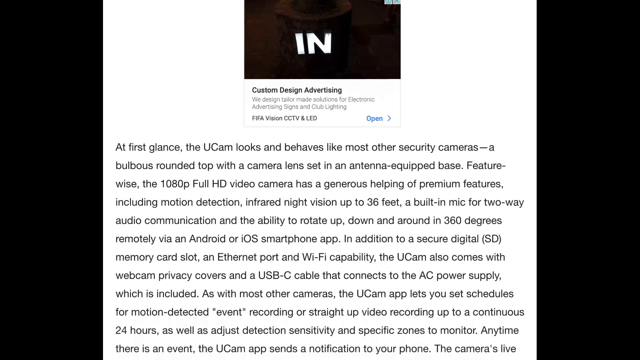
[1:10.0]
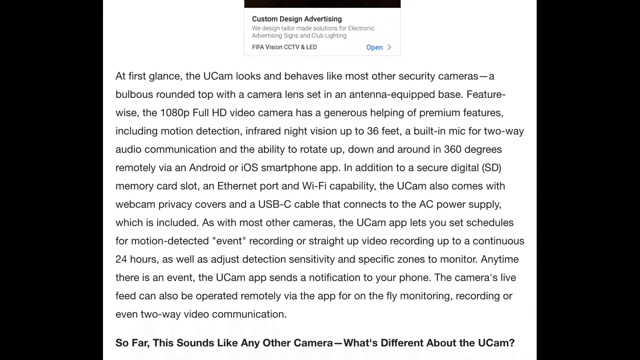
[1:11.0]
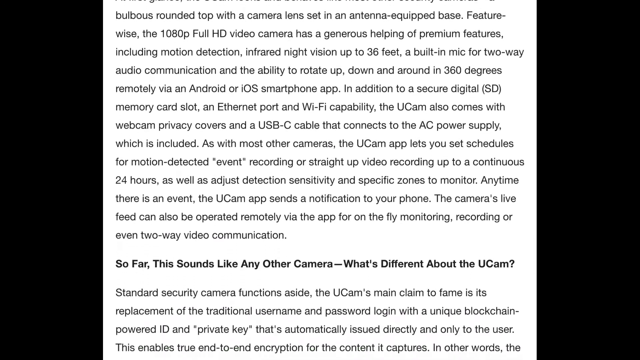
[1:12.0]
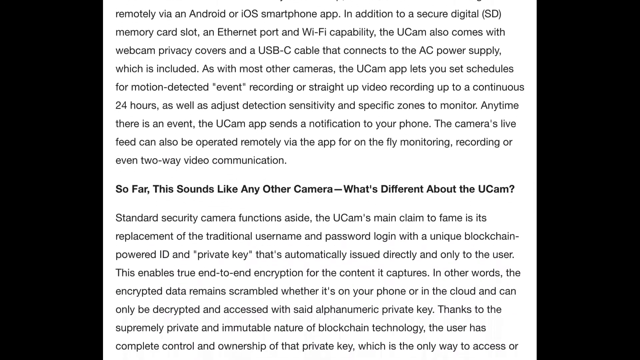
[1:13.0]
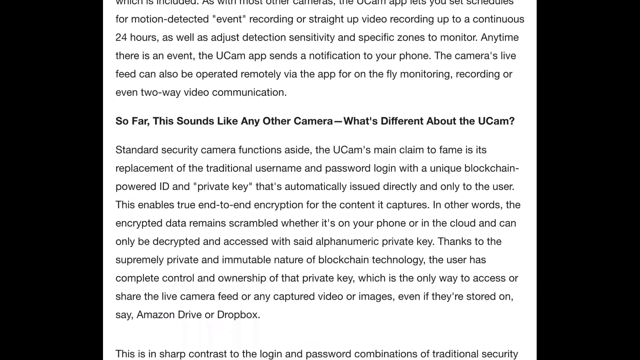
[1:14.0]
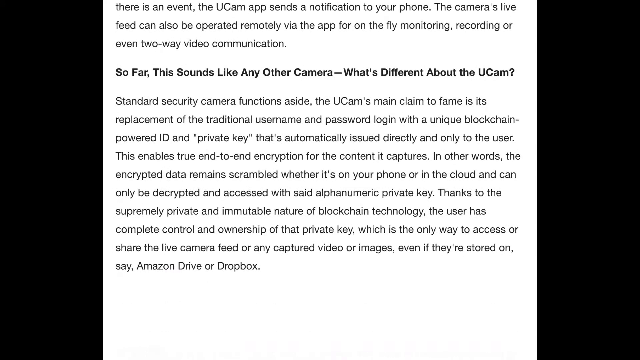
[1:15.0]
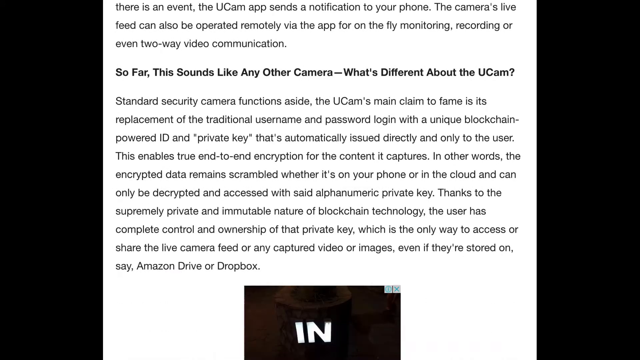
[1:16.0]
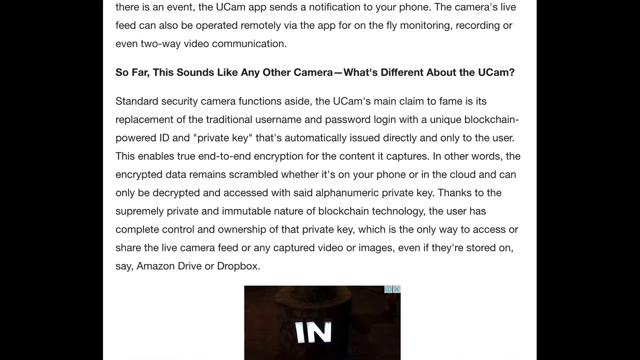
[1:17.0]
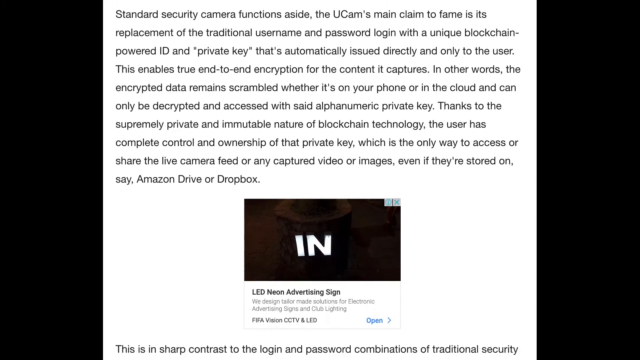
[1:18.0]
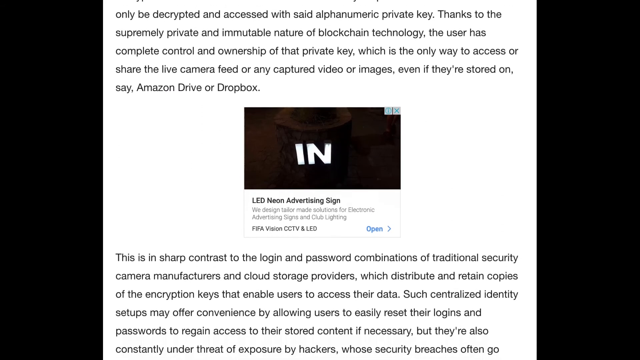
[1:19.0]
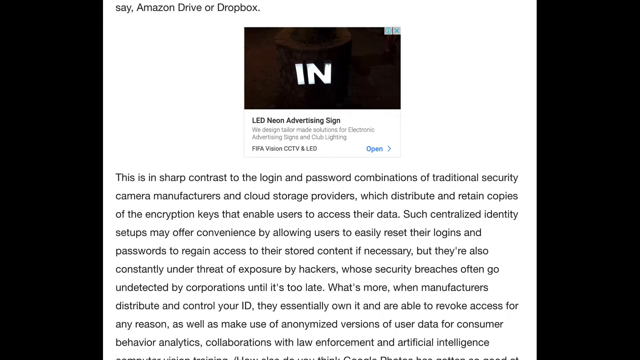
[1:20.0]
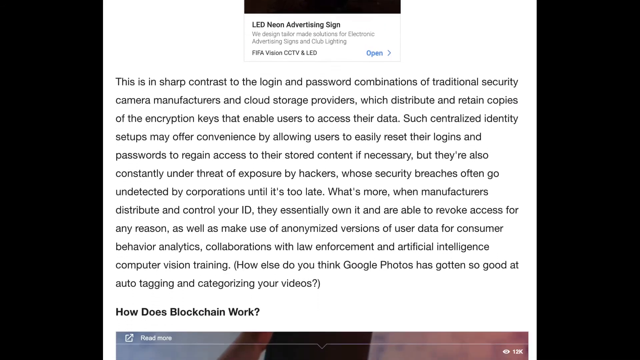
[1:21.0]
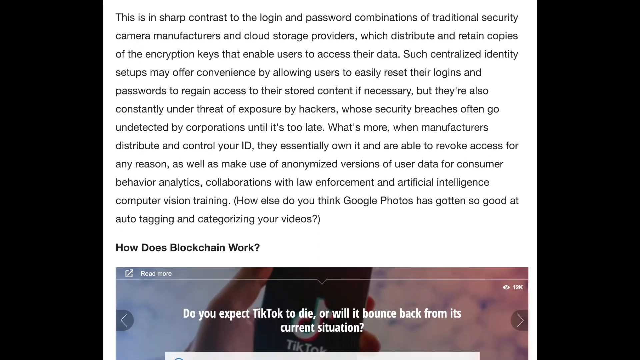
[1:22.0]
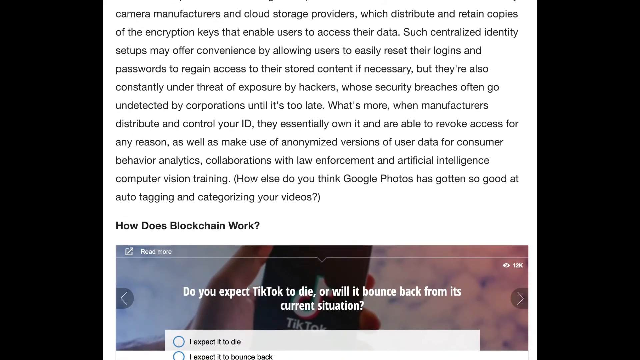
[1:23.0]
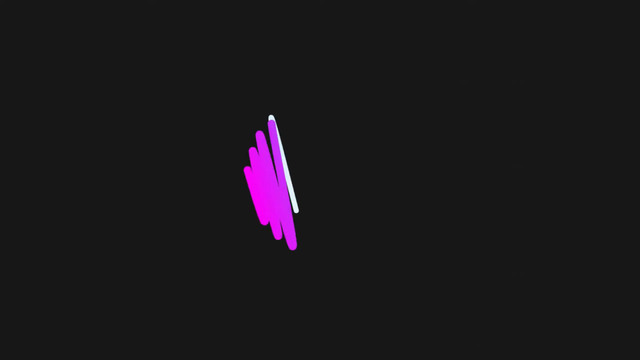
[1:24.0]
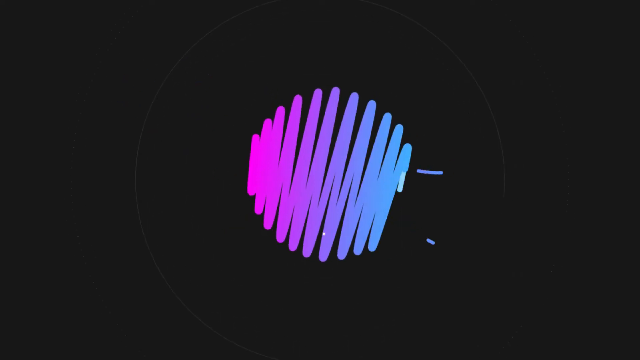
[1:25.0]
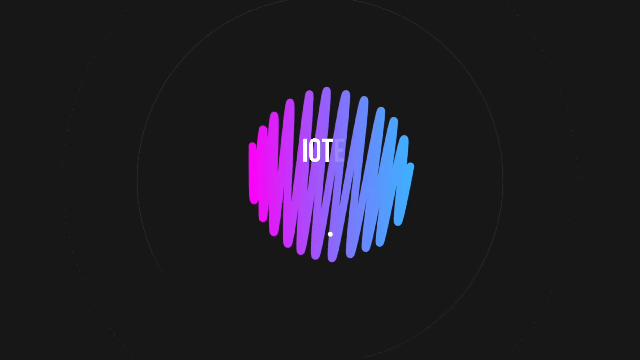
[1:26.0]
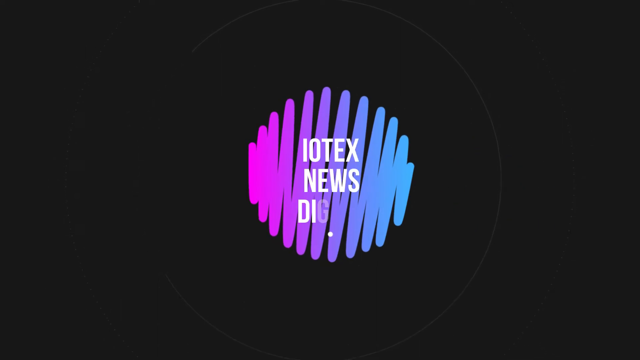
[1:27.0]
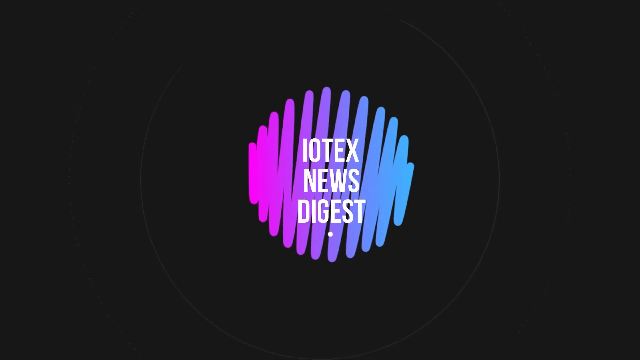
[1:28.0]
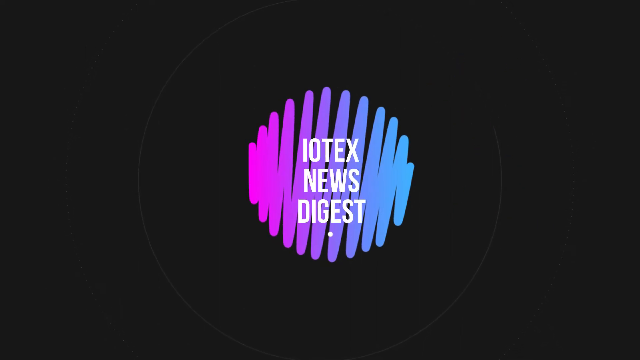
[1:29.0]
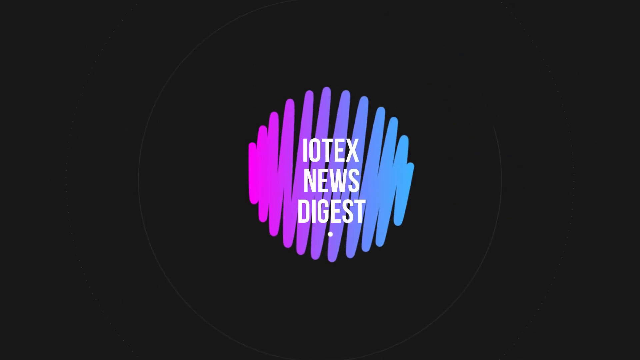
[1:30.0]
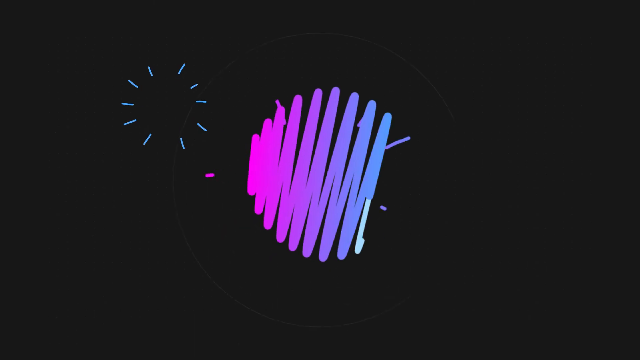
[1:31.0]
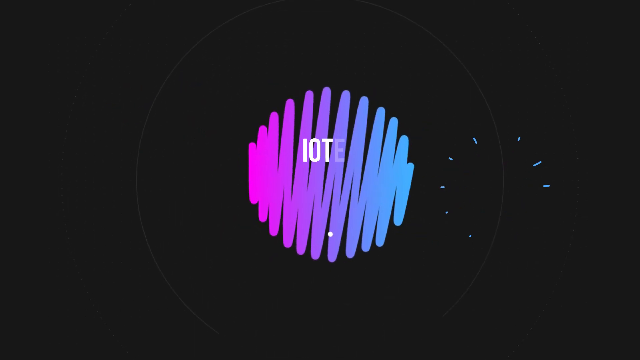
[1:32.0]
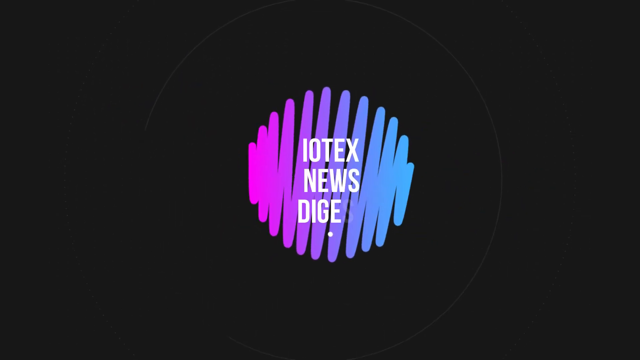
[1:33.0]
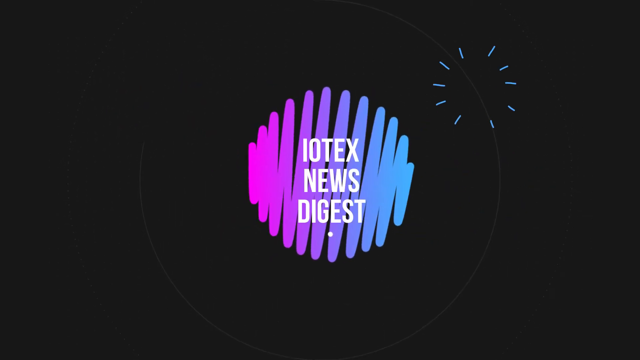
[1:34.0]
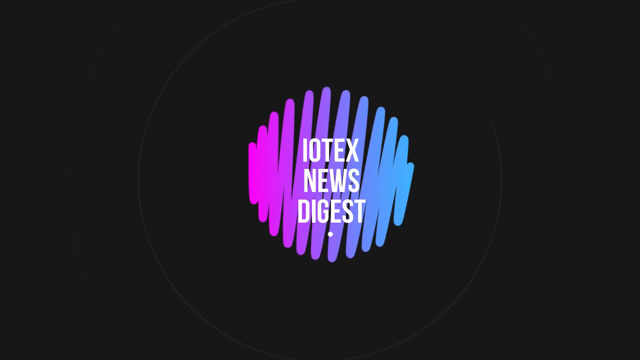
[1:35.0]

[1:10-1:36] The screen scrolls down past a fairly large paragraph to a kind of section header in bold letters that says "so far, this sounds like any other channel. What's the difference about UCAM?" Another paragraph follows describing the difficulties and advantages of the product, and then another header asking a question. The screen then returns to the black background with squiggly lines and a purple-to-blue gradient logo graphic, with white text. Something like fireworks goes up in the top right; the firework animation goes away slightly and comes back. The graphic is inside a larger, very thin circle, and the firework animation is at the top right of that circle. The video ends there.